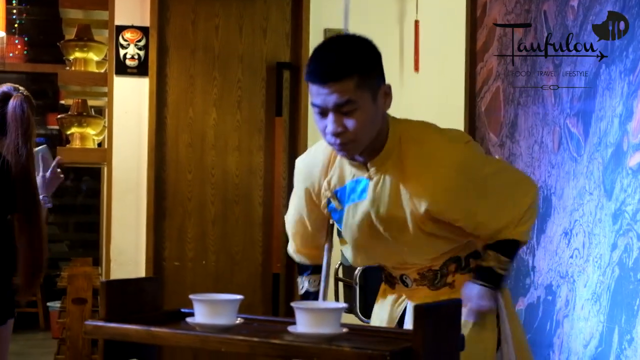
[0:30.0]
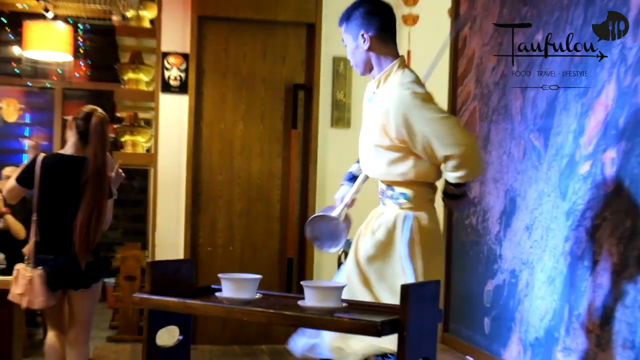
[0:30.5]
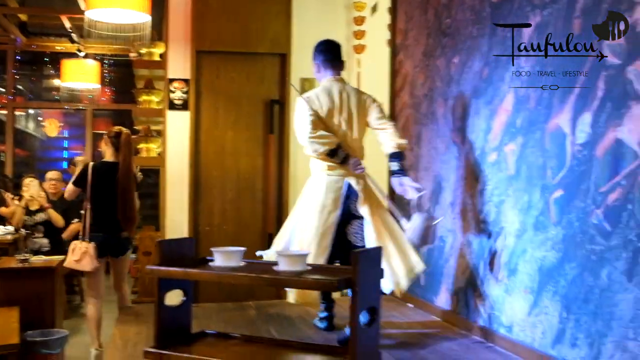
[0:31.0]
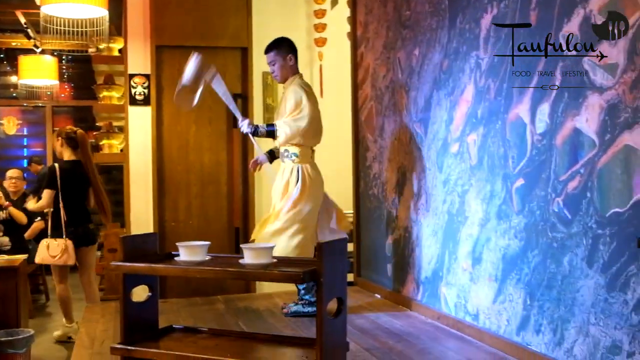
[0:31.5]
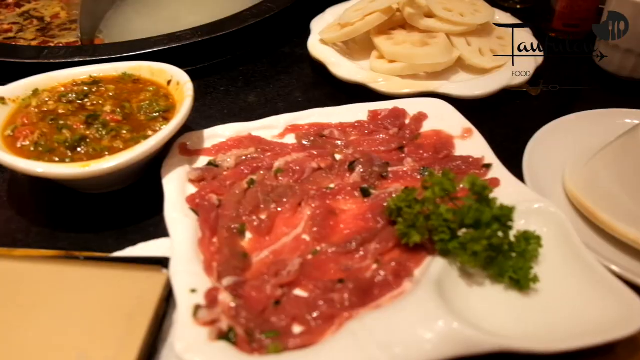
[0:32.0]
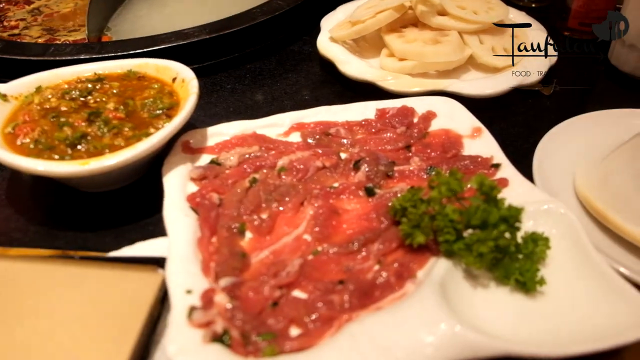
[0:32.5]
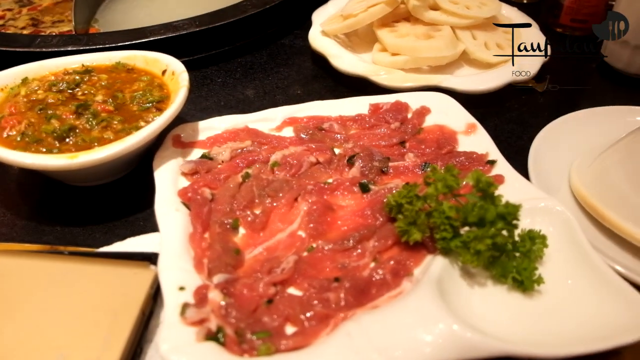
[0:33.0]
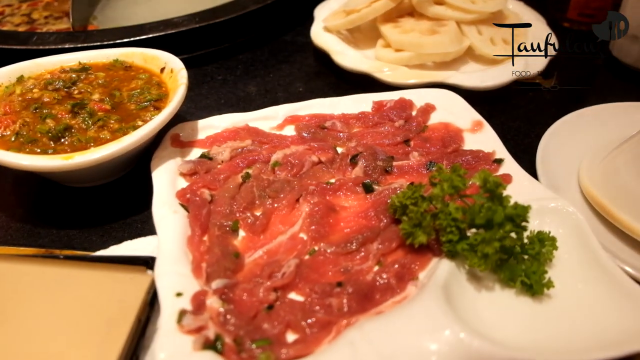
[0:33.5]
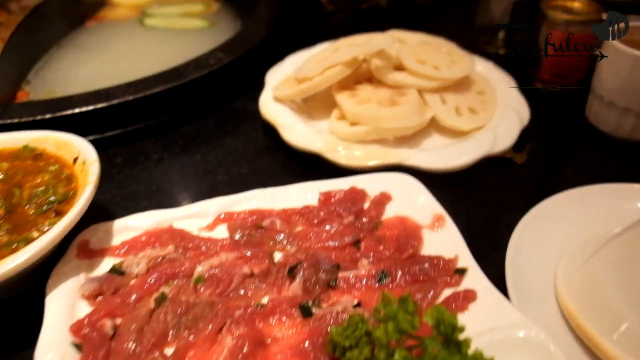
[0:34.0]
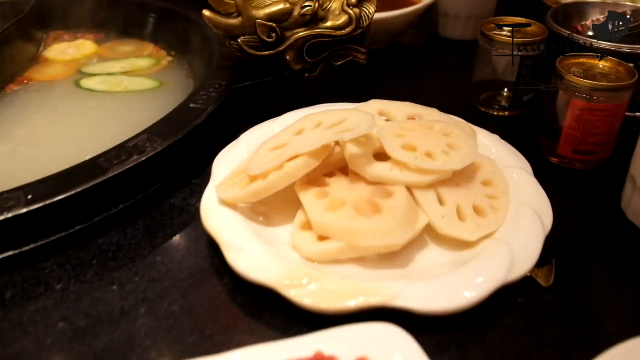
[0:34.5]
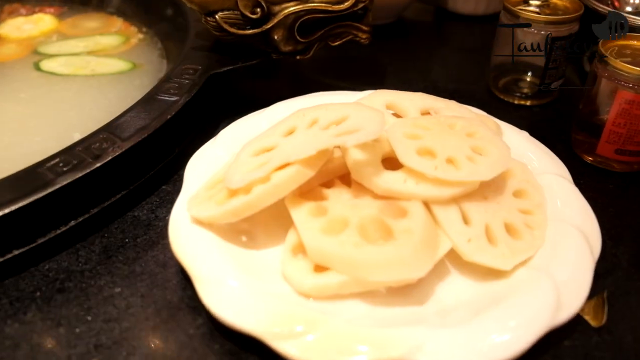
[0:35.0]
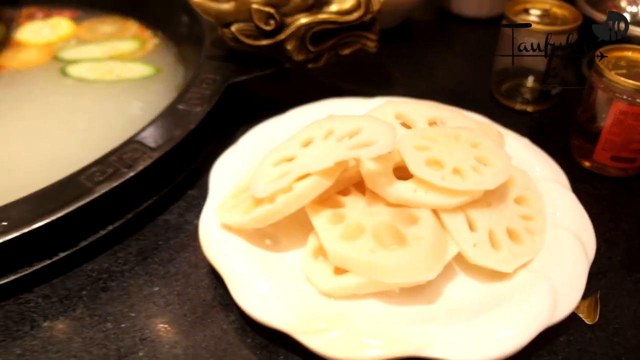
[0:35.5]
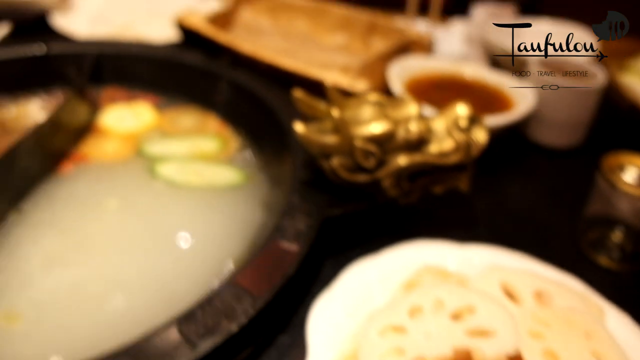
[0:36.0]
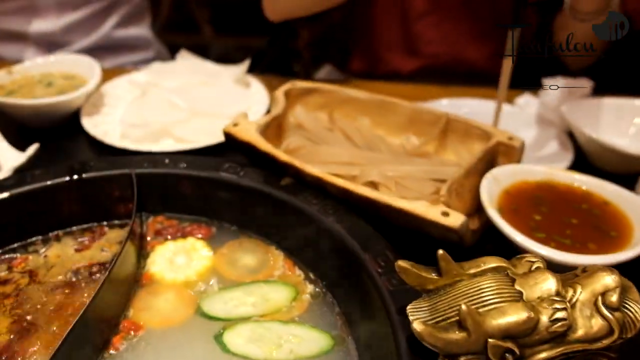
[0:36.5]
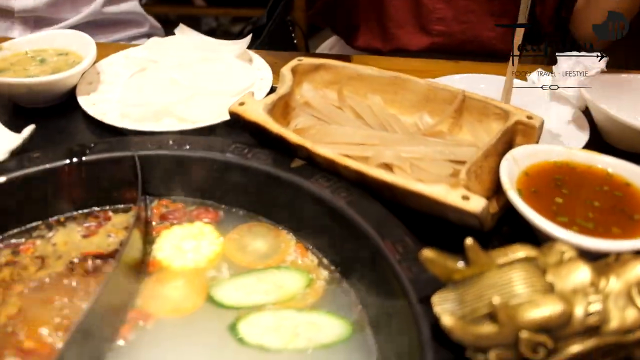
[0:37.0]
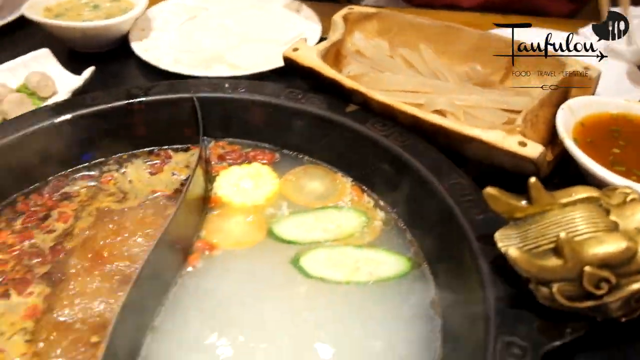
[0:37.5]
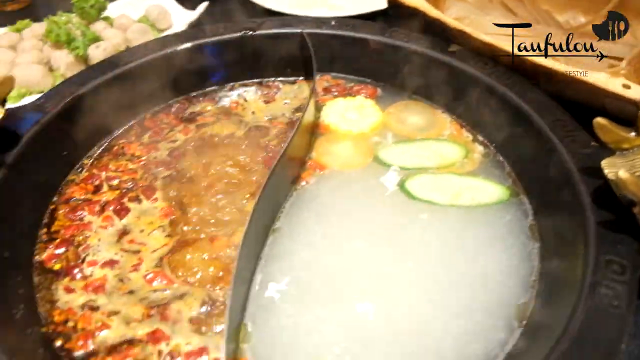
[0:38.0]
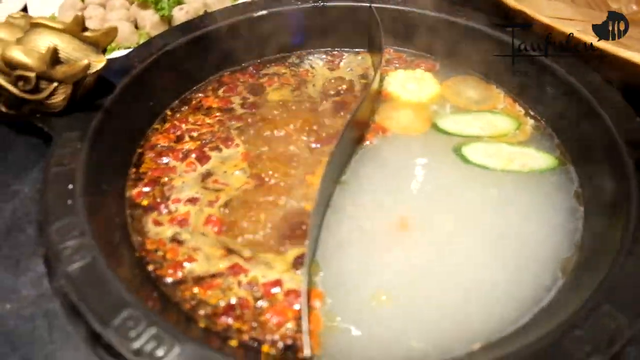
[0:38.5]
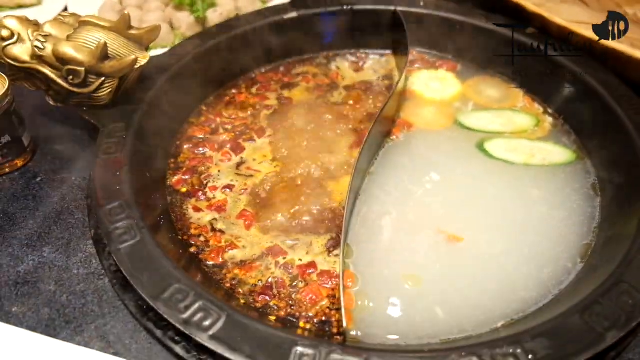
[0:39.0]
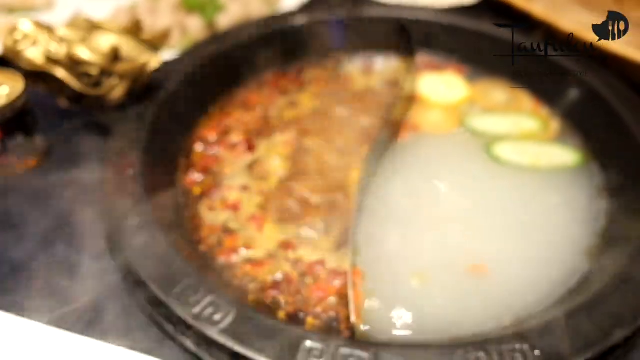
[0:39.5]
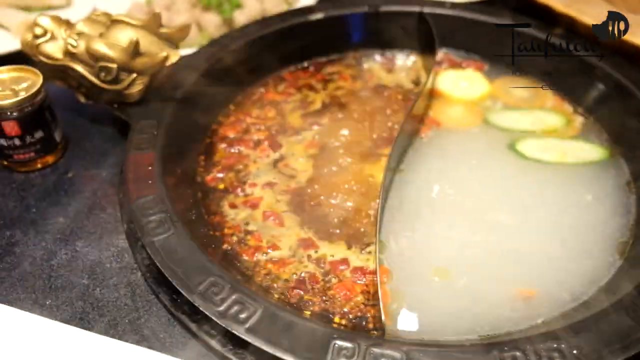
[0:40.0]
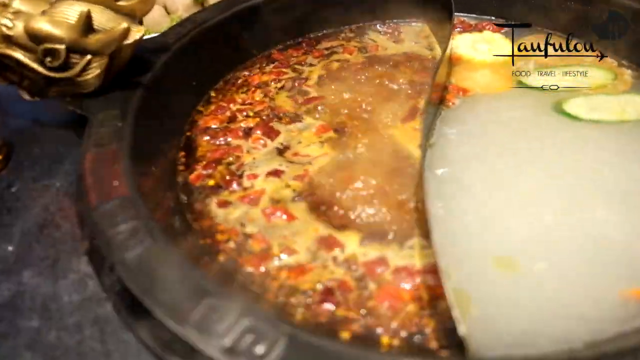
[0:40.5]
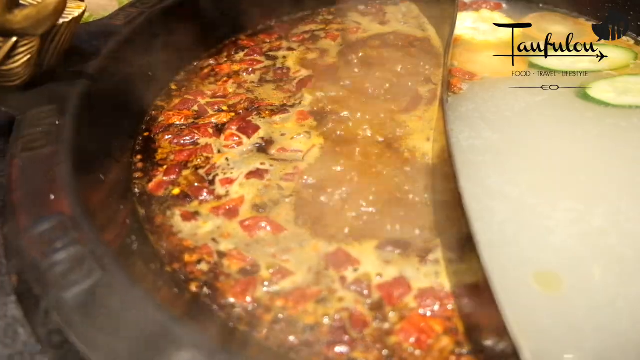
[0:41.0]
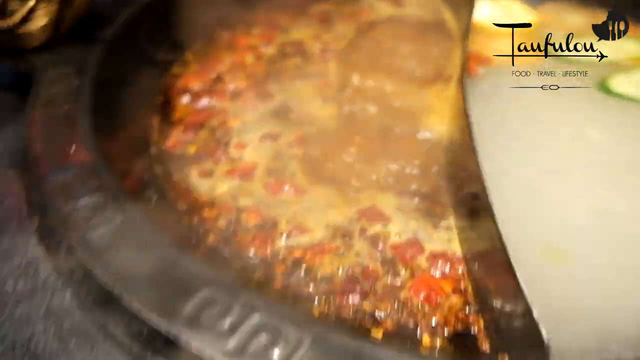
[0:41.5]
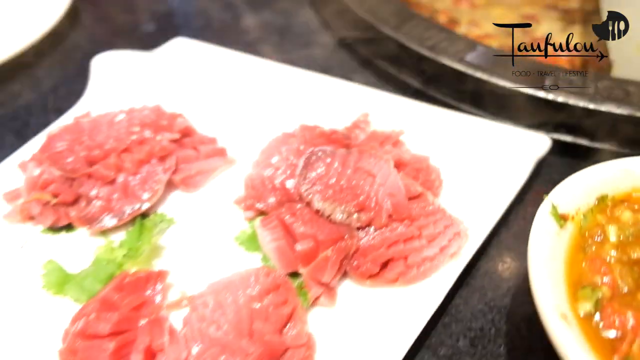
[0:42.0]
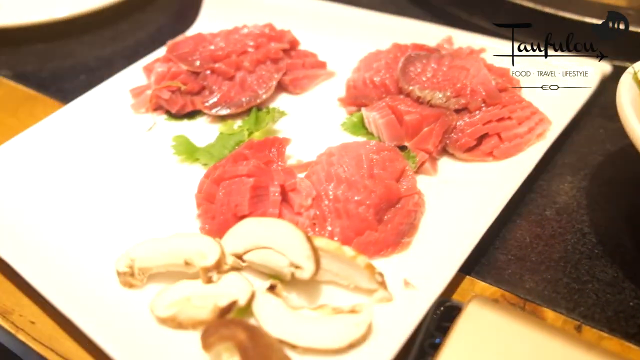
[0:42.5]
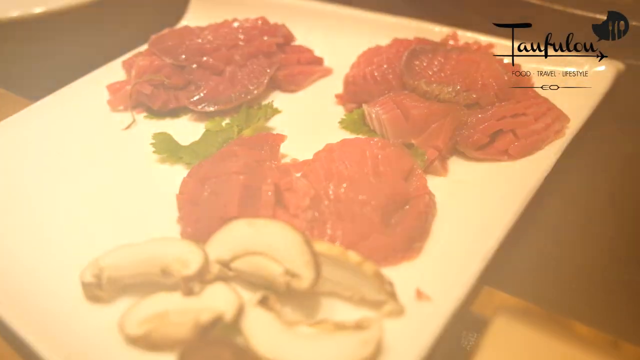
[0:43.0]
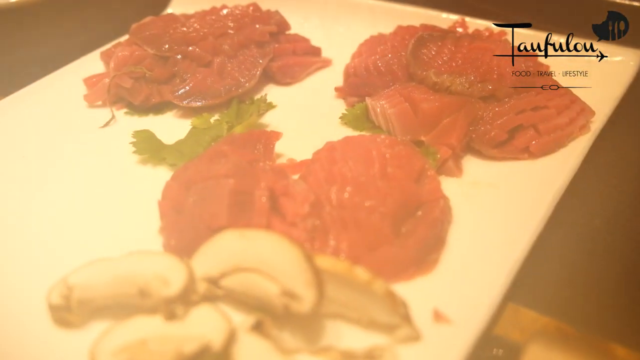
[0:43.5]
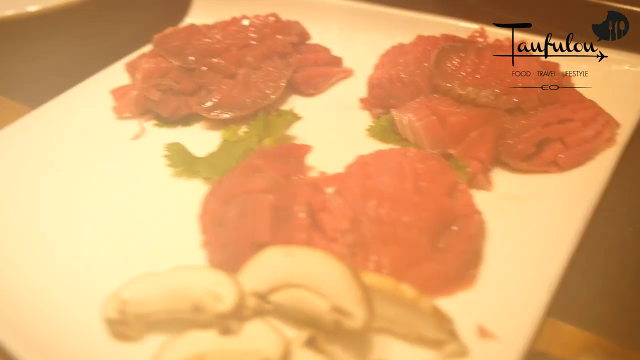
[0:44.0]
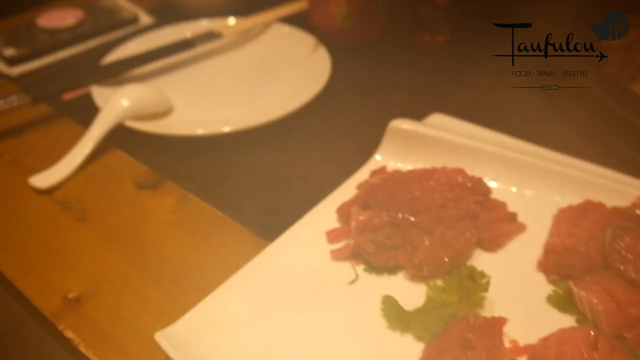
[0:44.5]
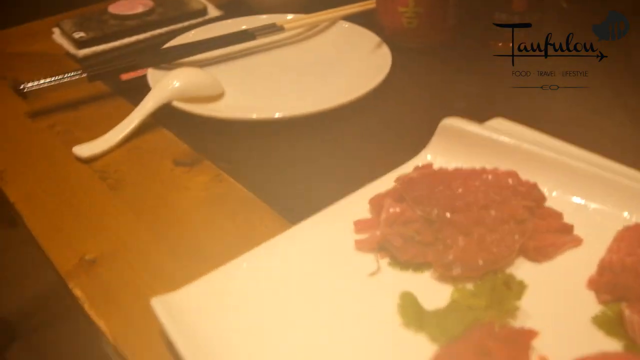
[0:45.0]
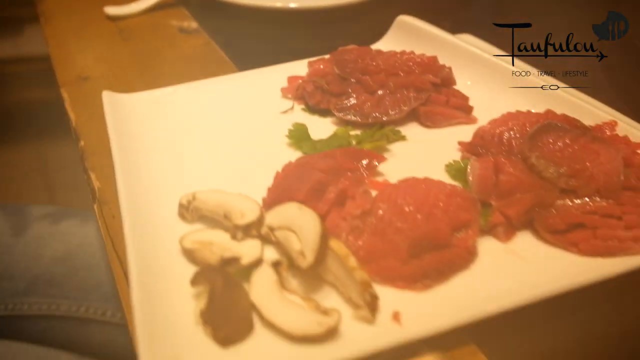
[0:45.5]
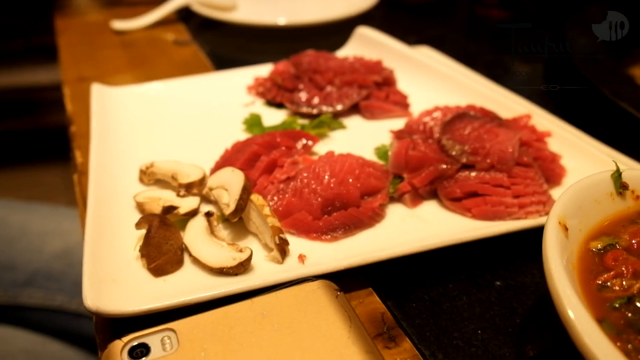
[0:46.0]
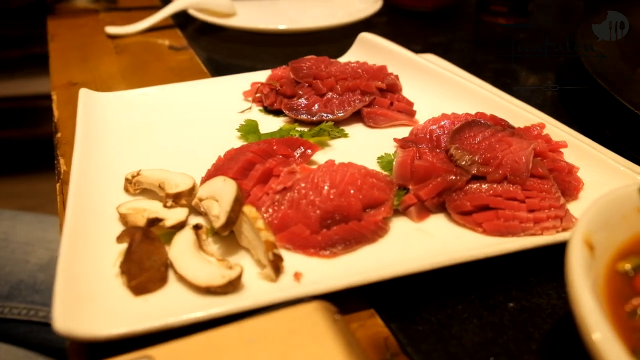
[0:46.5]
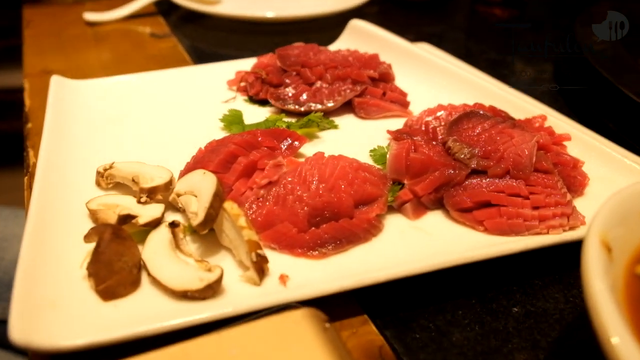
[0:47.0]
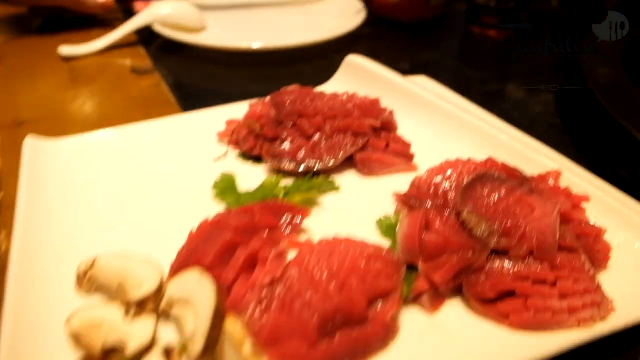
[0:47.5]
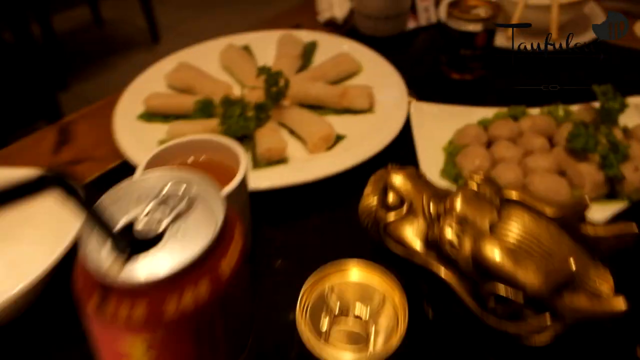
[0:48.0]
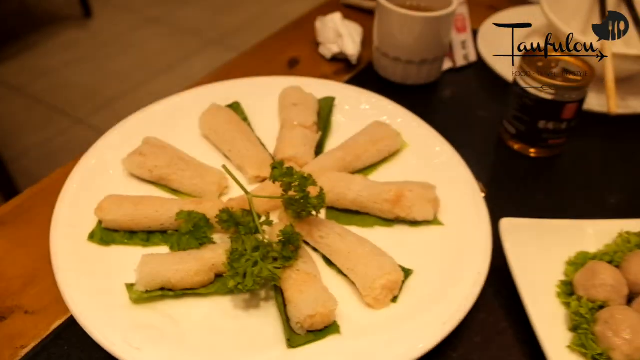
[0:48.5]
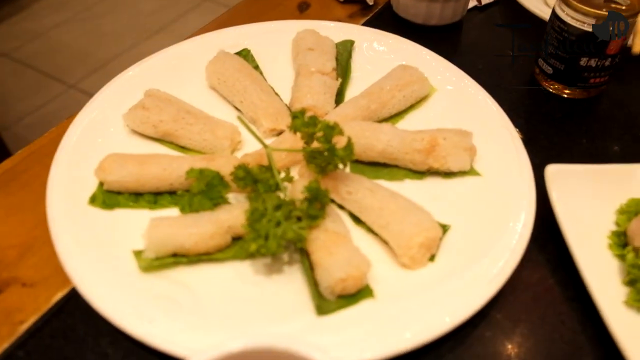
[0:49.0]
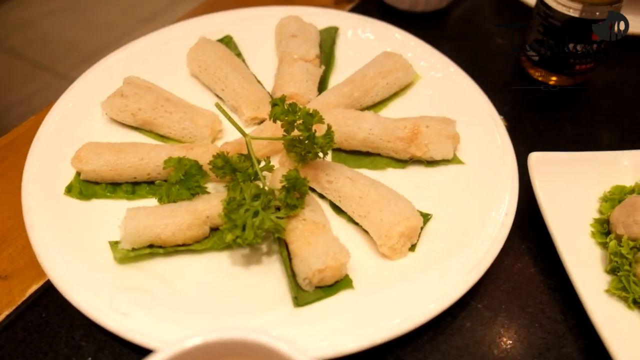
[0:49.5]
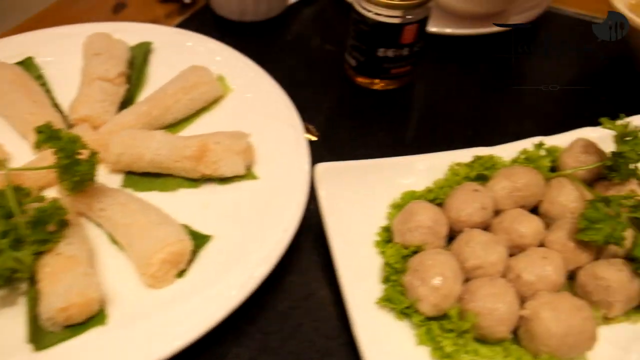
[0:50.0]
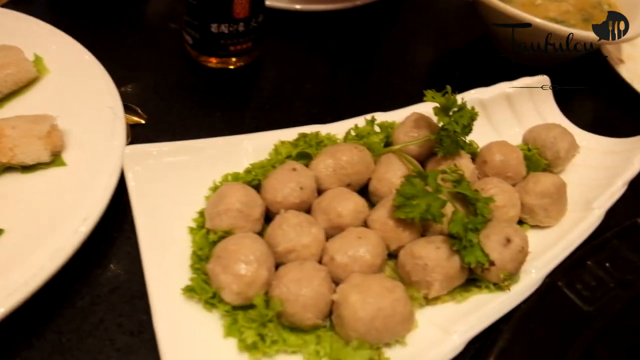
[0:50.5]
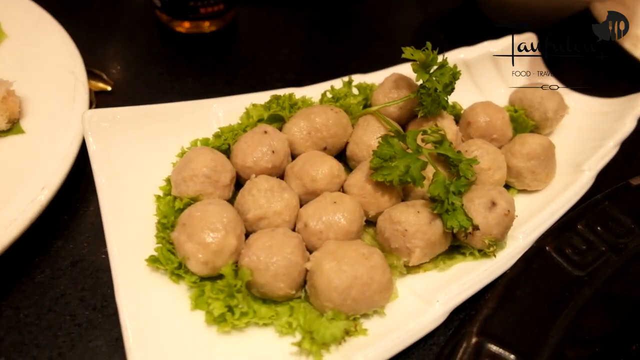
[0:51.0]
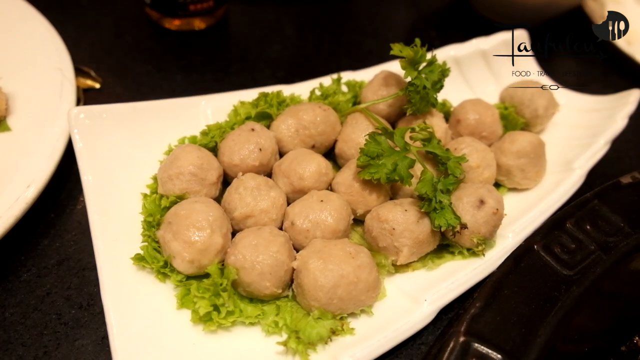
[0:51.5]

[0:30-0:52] A stage performer in a yellow gown twirls a baton around. The video then cuts to a table with raw beef topped with some parsley, another plate that looks like it holds soup, and another plate of what kind of looks like chips or could be sliced fruit. It cuts to what looks like a pan boiling liquids that kind of look like soup, with vegetables that kind of look like zucchini floating on top. Next it cuts to another part of the table, where a plate holds raw meat that kind of looks like beef along with some chopped mushrooms. The view then turns to another plate with what looks like spring rolls and another plate full of meatballs.